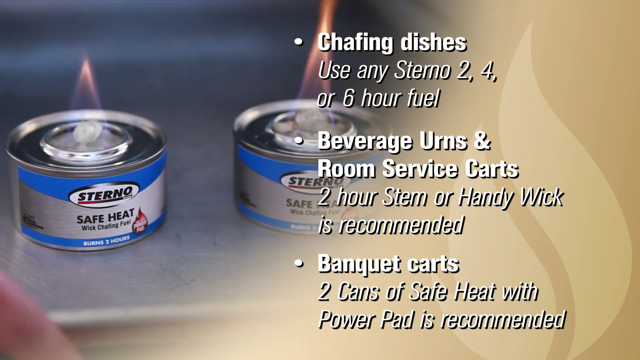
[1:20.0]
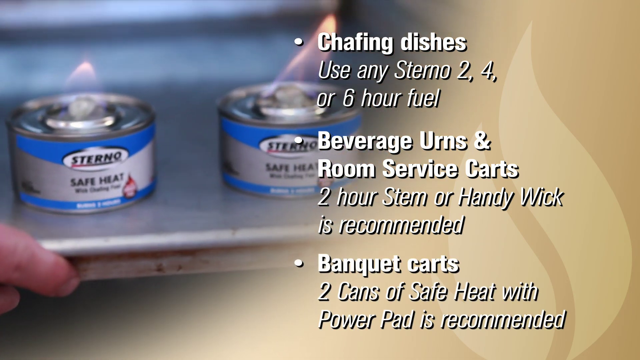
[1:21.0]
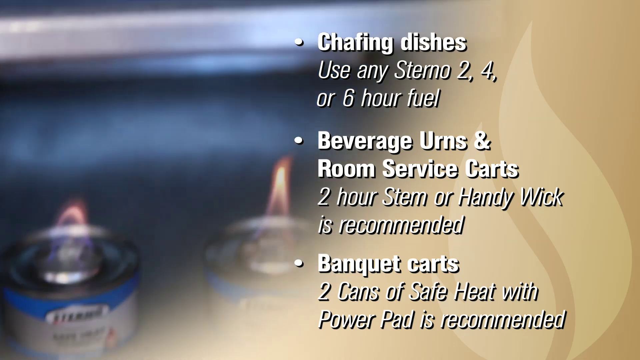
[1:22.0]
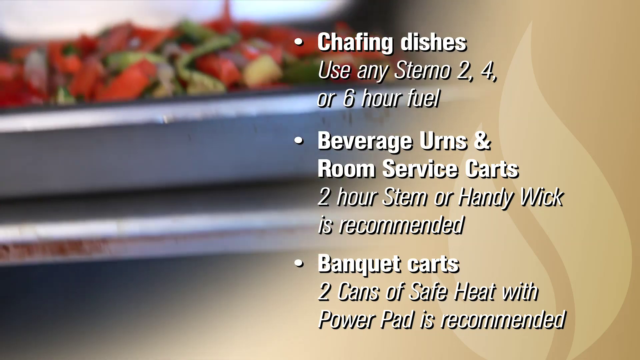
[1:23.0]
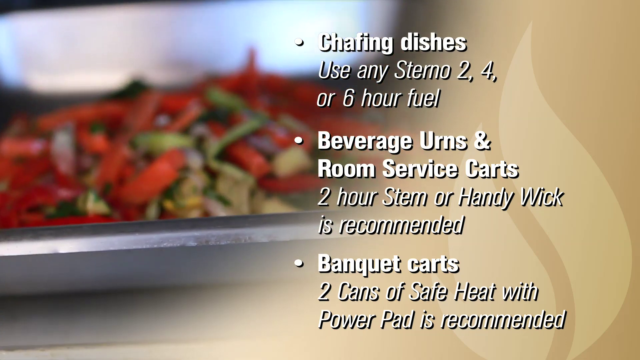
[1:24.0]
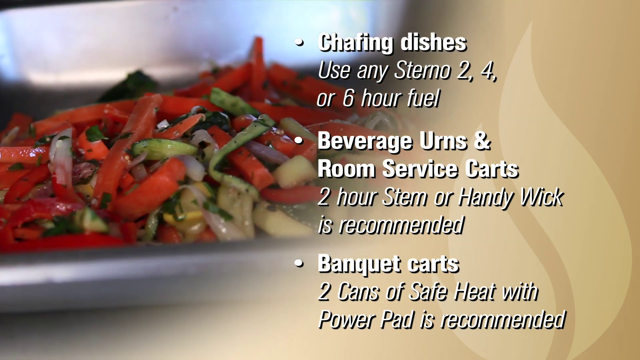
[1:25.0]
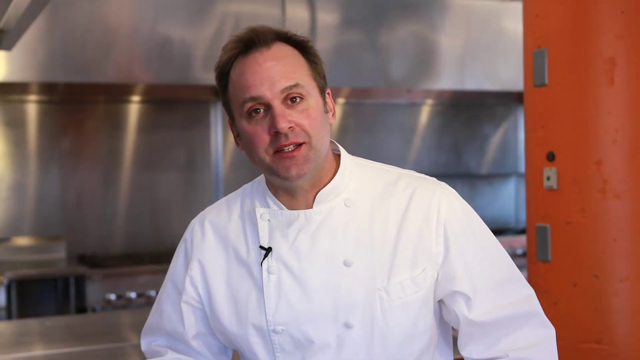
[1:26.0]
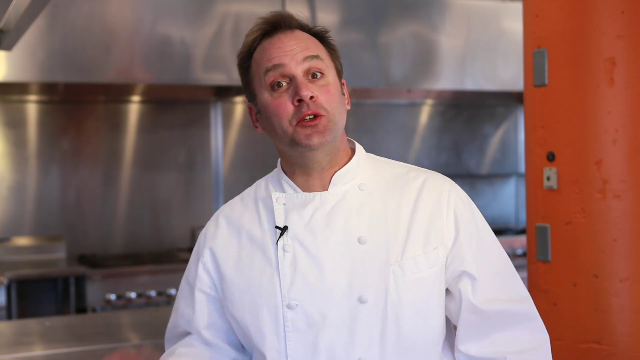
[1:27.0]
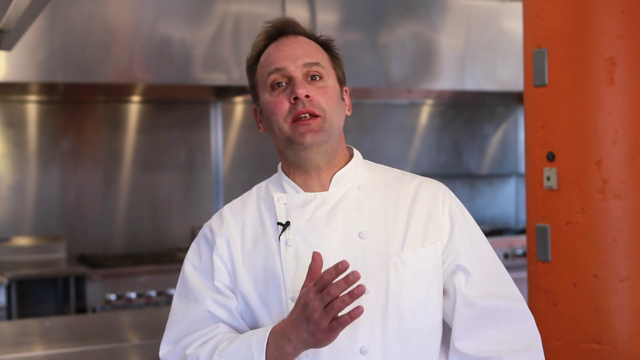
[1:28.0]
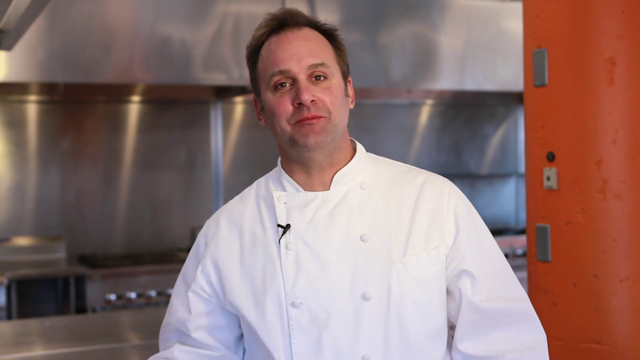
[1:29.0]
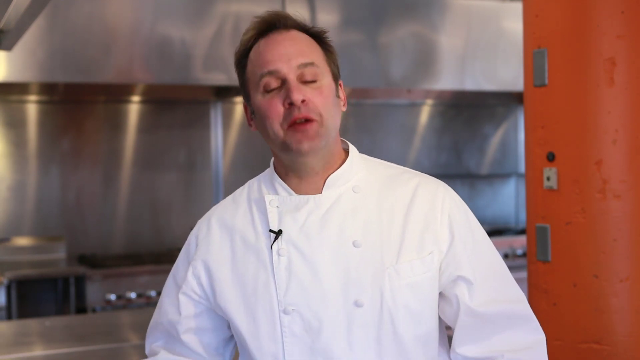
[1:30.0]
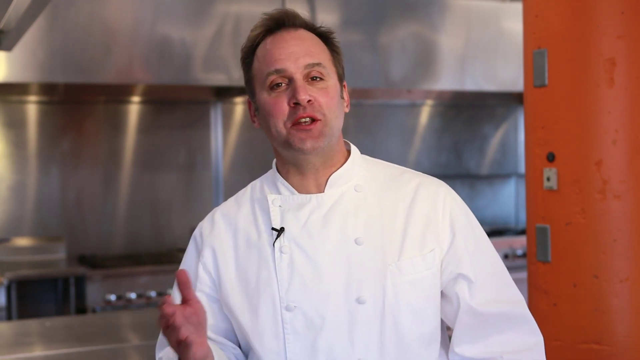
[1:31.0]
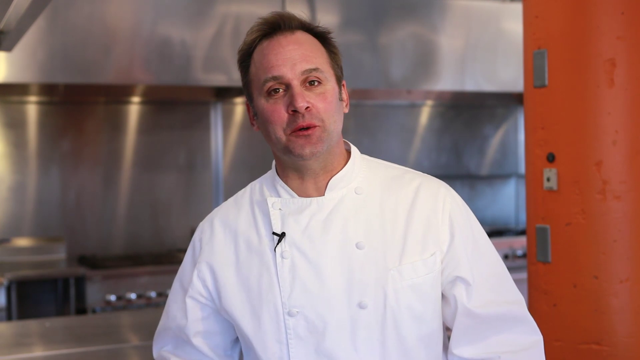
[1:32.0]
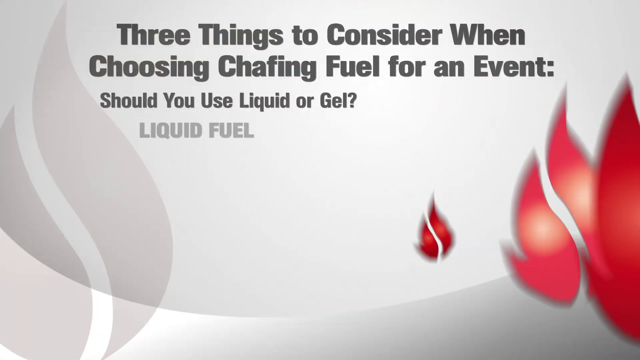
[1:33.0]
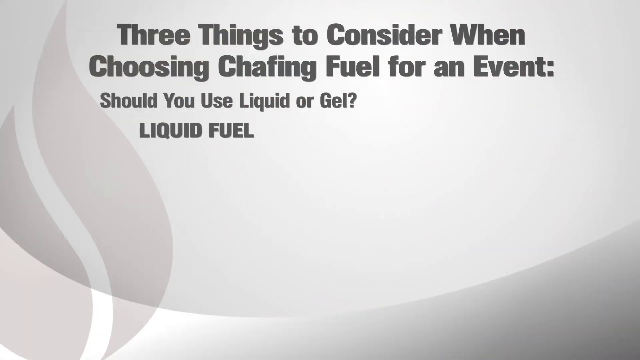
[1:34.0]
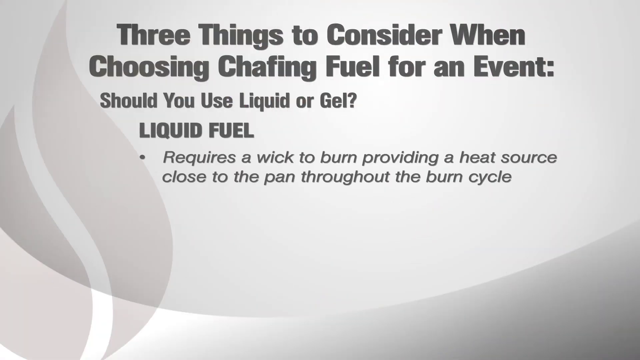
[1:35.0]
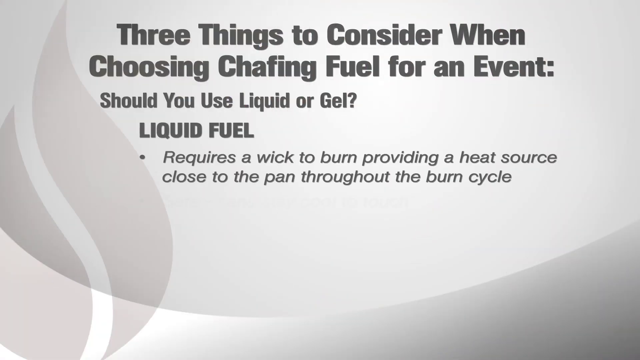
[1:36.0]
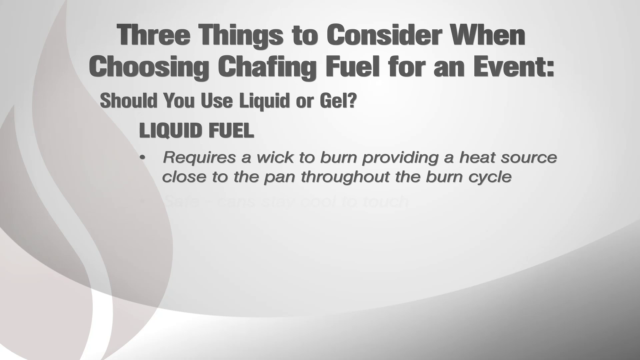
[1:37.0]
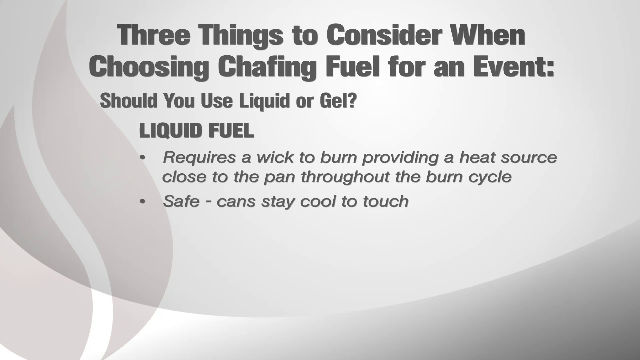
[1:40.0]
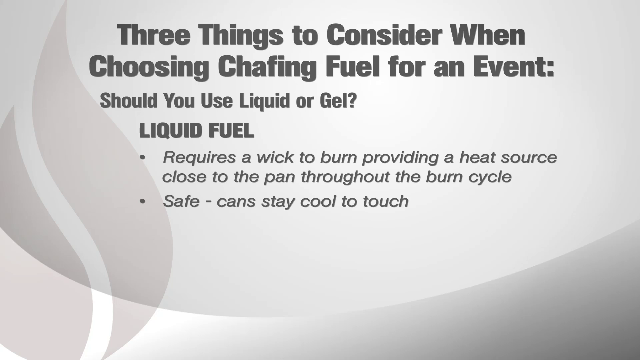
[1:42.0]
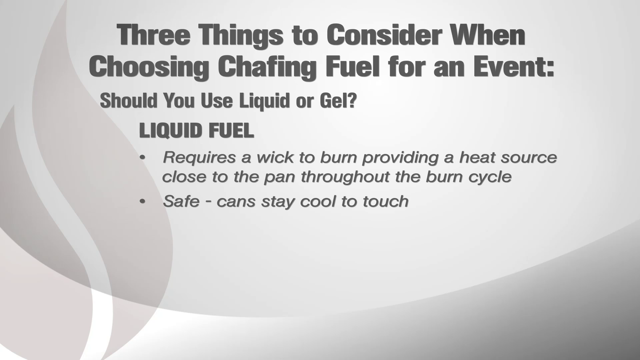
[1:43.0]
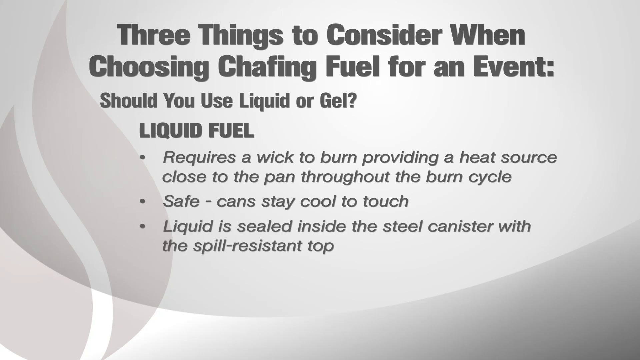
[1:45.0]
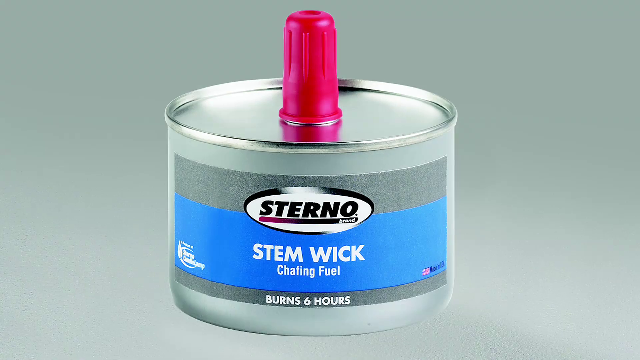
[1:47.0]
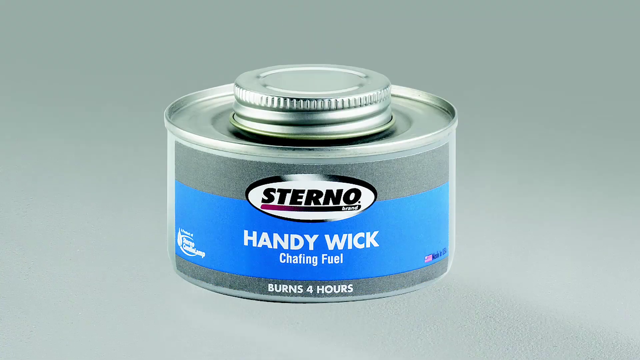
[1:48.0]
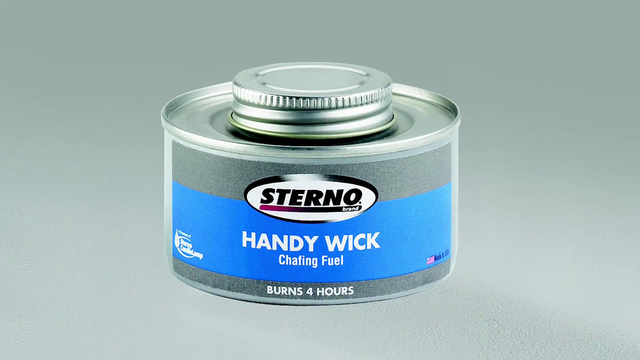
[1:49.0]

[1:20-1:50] Two lit Sterno cans are on the left side of the screen. On the right is bullet-point text beginning "chafing dishes, use any Sterno two, four, or six-hour fuel", then "beverage urns, and room service carts" with the second bullet point reading "two-hour Sterno or handy wick is recommended", and then "banquet carts, two cans of safe heat", with other text underneath. Behind the text, the scene changes to vegetables in a serving pan. The video then returns to the chef, who stands in the center of the kitchen speaking to the camera and gesturing with his right hand; a microphone is clipped to his right apron strap. Flames appear across the screen and a new text screen comes up, starting at the top in black text: "three things to consider when choosing chafing fuel for an event. Should you use liquid or gel? Liquid fuel", with a bullet point reading "requires a wick to burn, providing a heat source close to the pan throughout the burn cycle", then "safe, can stay cool to touch", and "liquid is sealed inside the steel canister with the spill resistant top." The screen changes to a Sterno brand can with a red cap on top; the can is unlit, and beneath Sterno the label reads "Stemwick chafing fuel, burn six hours." A different Sterno can then appears in the center of the screen, also with a red cap and unlit, its label reading "Stemwick chafing fuel, burned six hours." Next comes a can of Sterno with an aluminum cap on top, labeled "handy wick chafing fuel, burns for 4 hours."